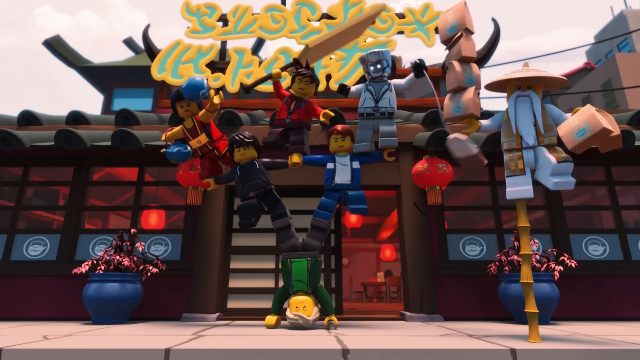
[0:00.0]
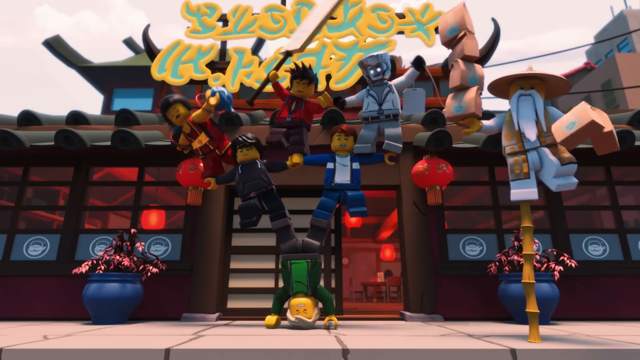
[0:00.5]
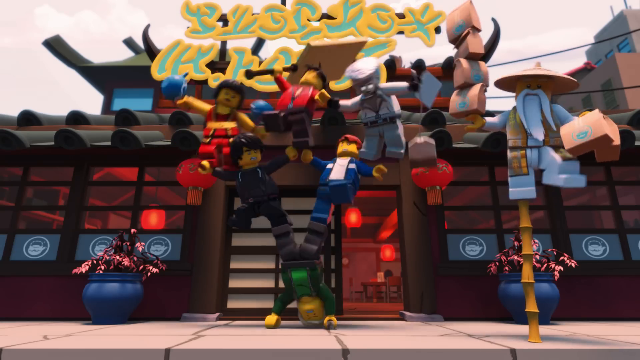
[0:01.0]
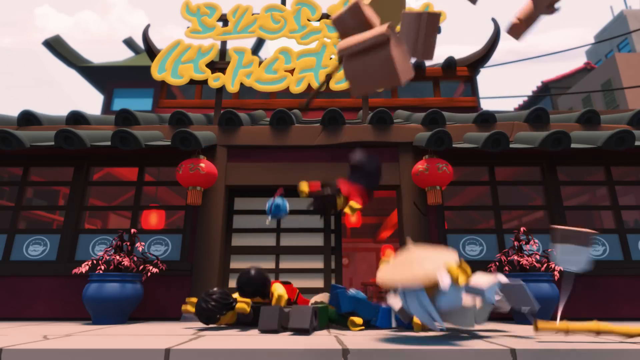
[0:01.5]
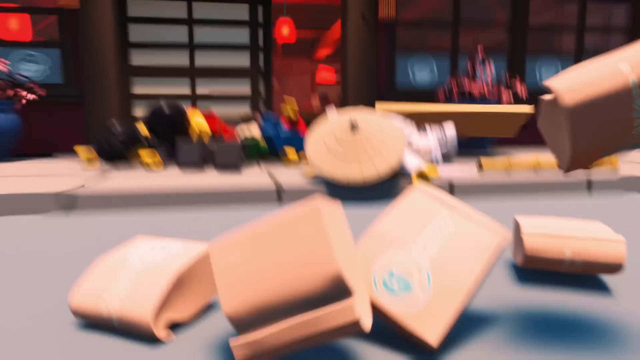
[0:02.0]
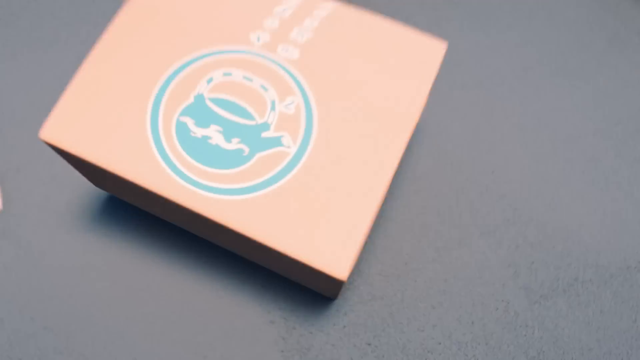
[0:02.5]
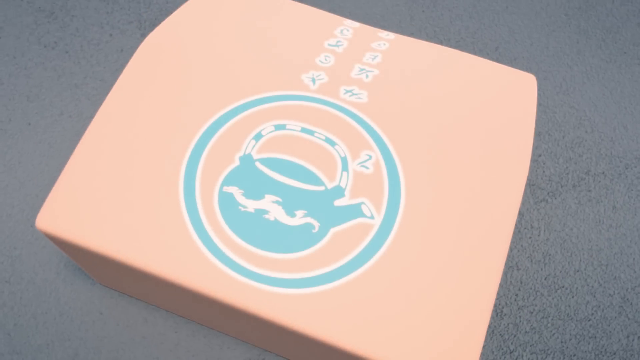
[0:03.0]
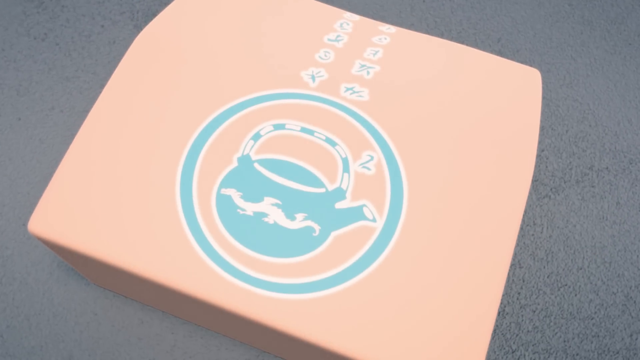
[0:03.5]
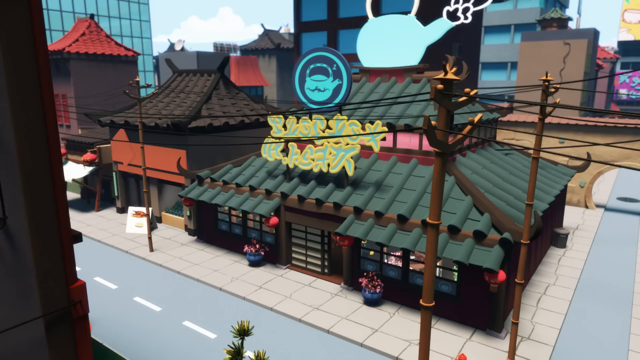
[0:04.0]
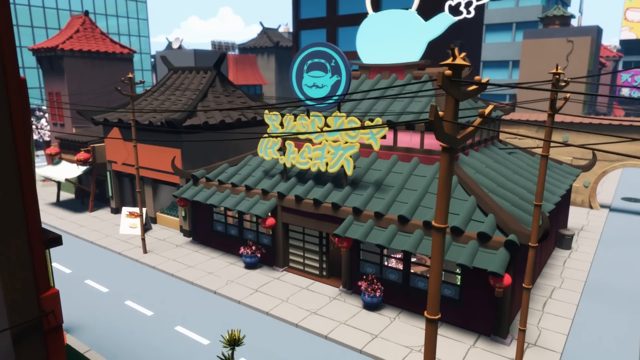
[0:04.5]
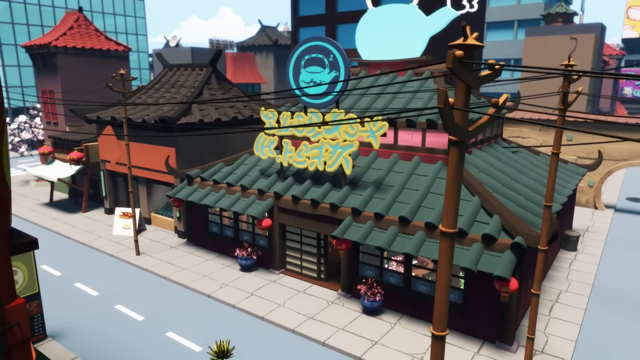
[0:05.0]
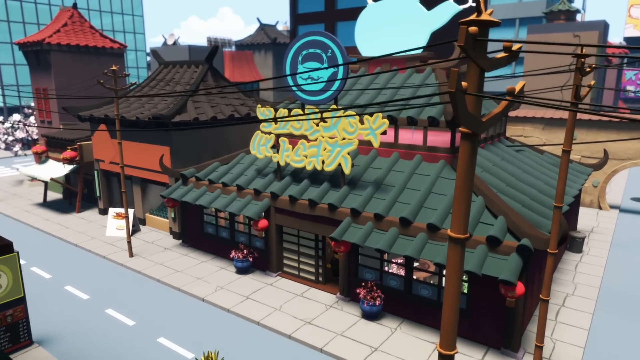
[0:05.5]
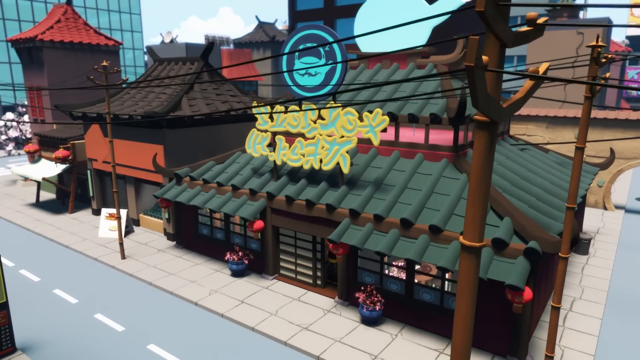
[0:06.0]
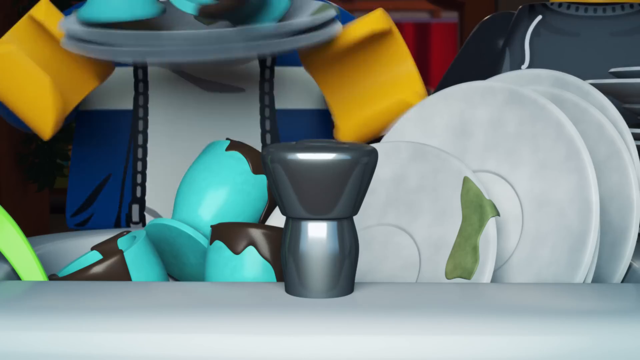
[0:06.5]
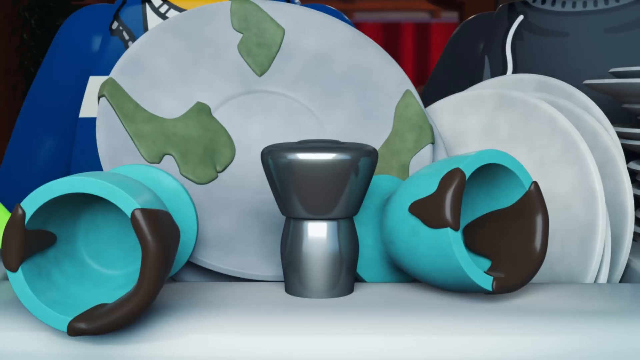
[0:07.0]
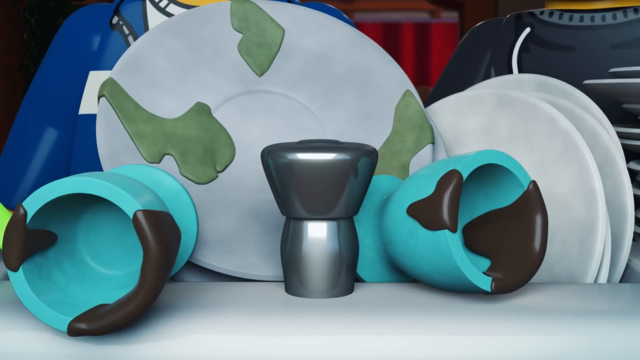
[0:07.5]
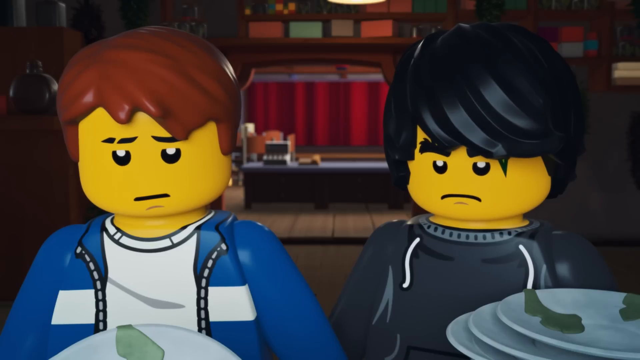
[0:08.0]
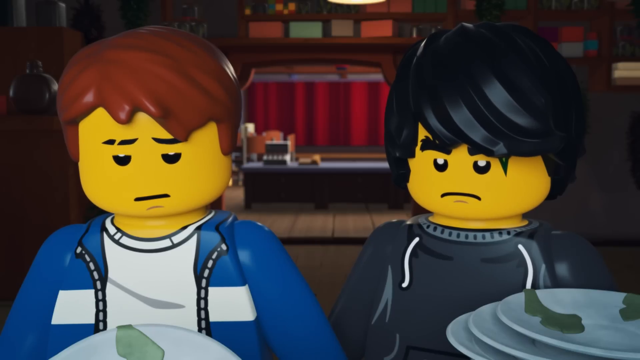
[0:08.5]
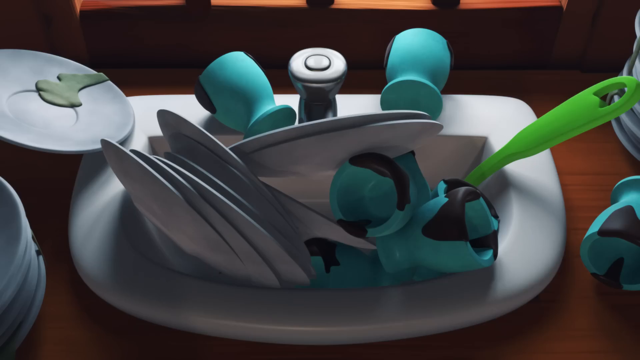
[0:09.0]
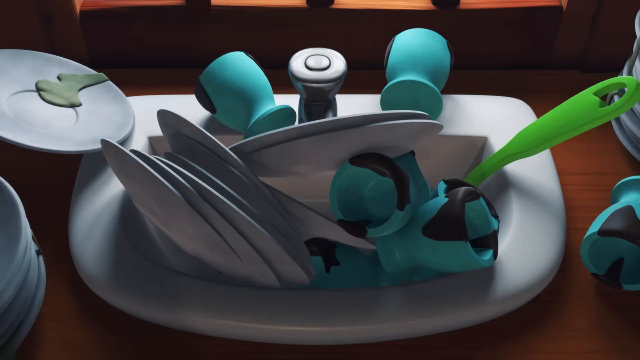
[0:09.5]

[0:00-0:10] This appears to be an animated kids' movie, probably The Lego Movie, since all the characters are made of Lego. At first the characters seem to be in a tower. A building is then shown where there are a lot of dishes to be washed, and the character is not very happy about it. The setting seems to be some kind of restaurant with a waitress involved; the sink holds a lot of dishes, and two people are standing there. It seems the boss has piled the dishes up for the waitress to wash. He has a very sad look on his face. There are no animals and no real humans in the scene.